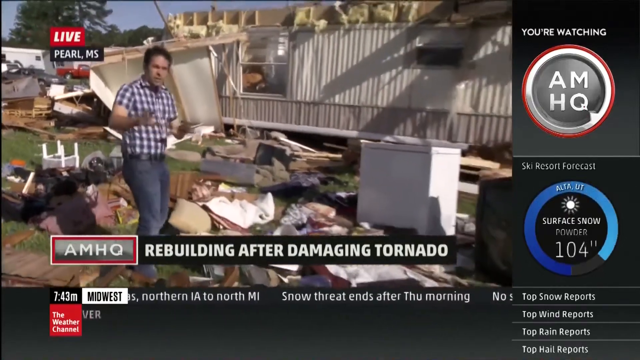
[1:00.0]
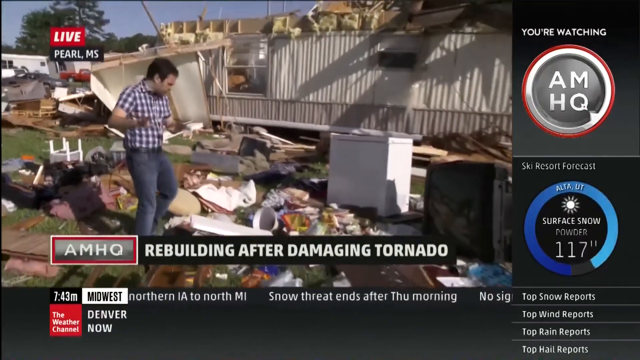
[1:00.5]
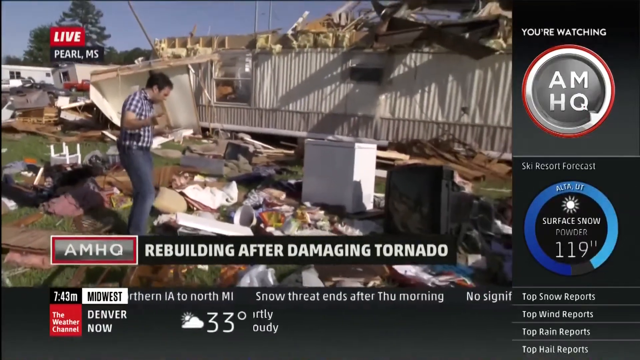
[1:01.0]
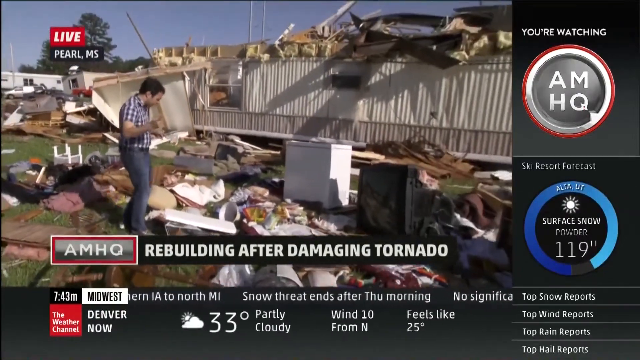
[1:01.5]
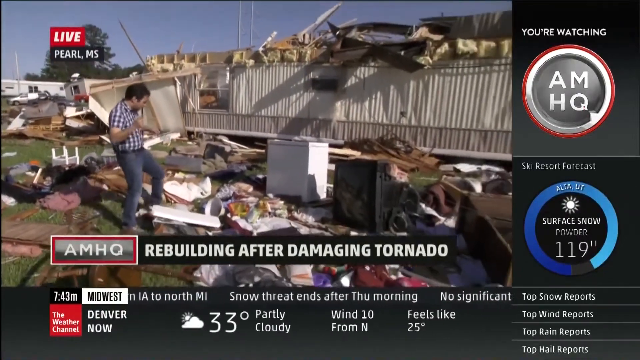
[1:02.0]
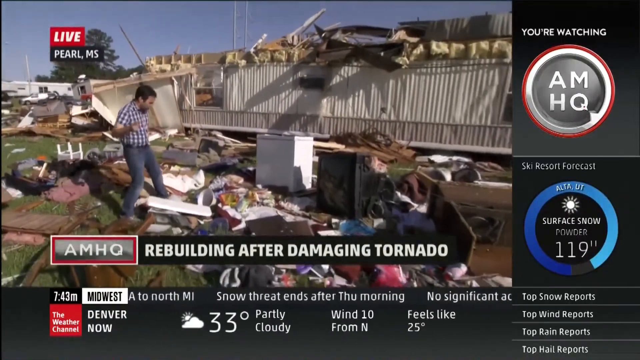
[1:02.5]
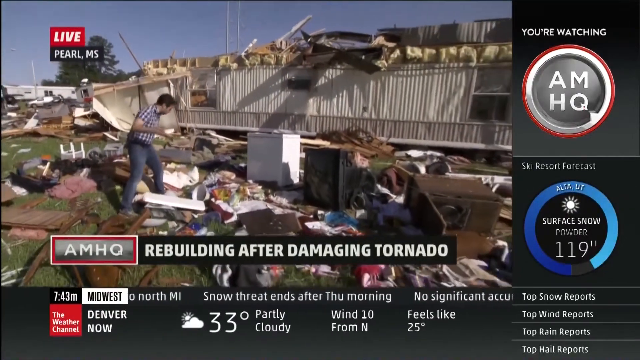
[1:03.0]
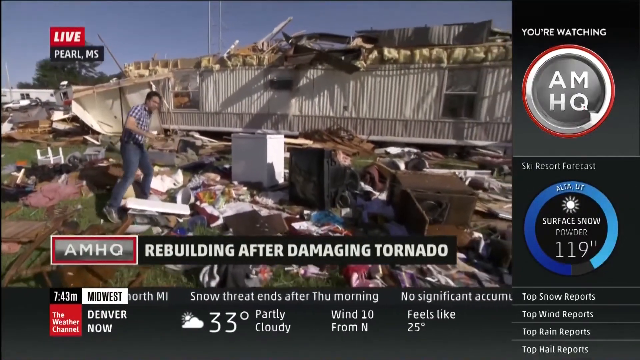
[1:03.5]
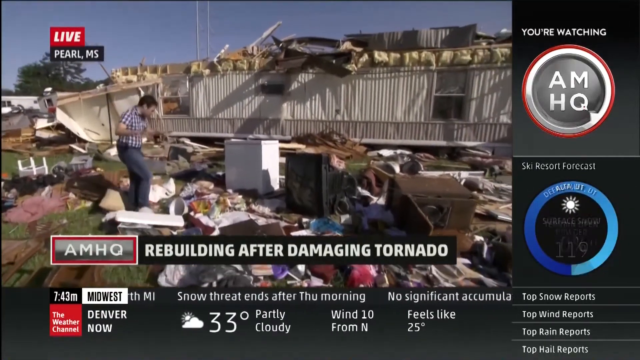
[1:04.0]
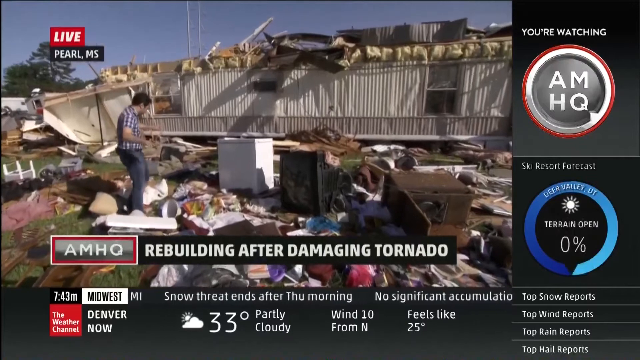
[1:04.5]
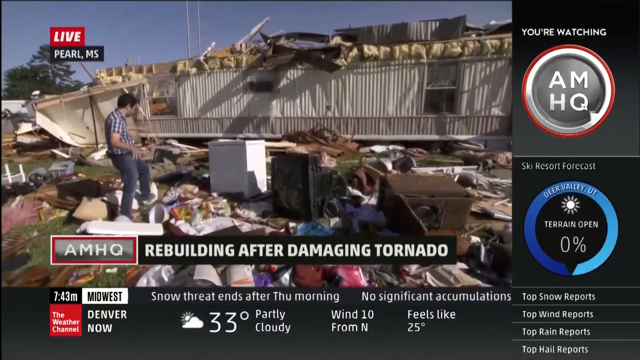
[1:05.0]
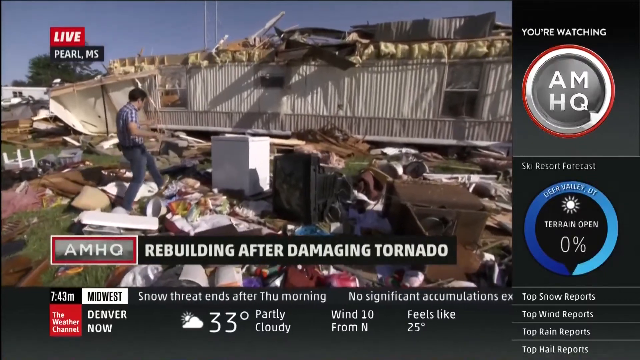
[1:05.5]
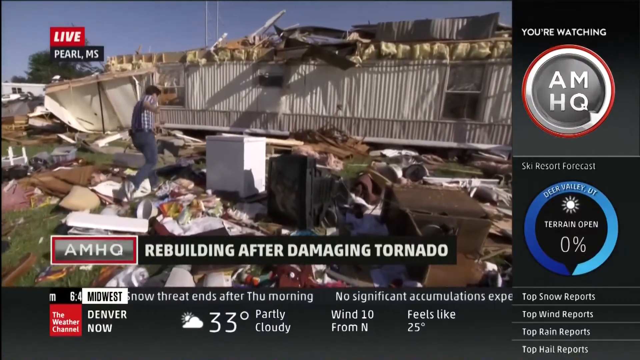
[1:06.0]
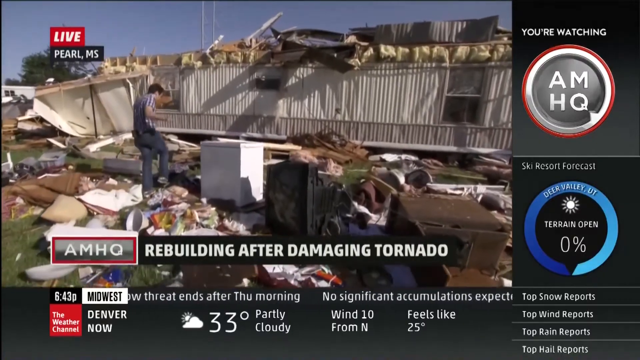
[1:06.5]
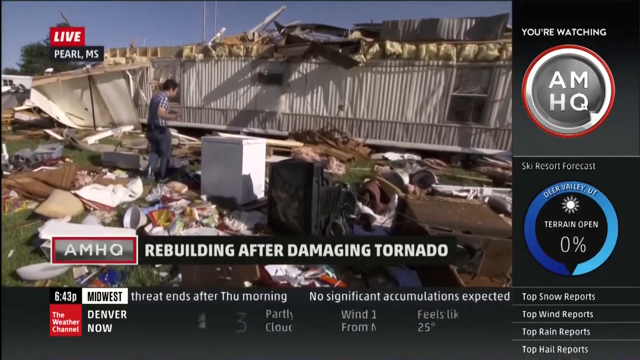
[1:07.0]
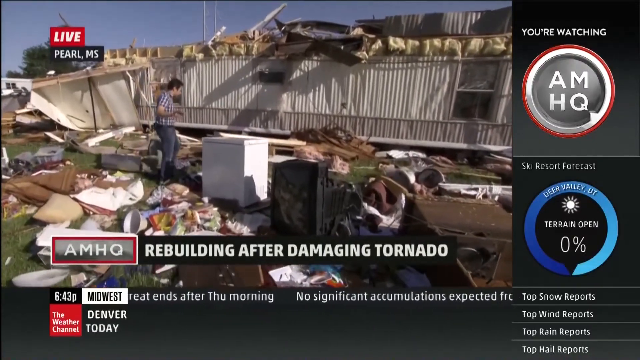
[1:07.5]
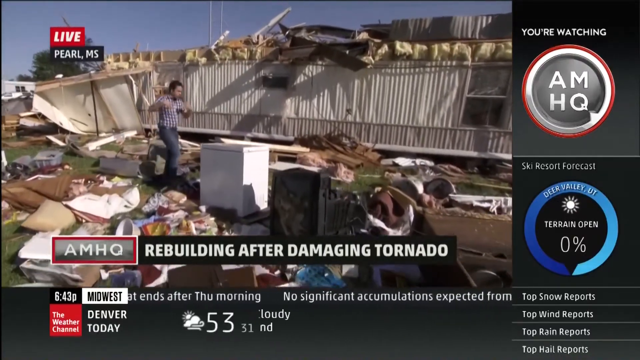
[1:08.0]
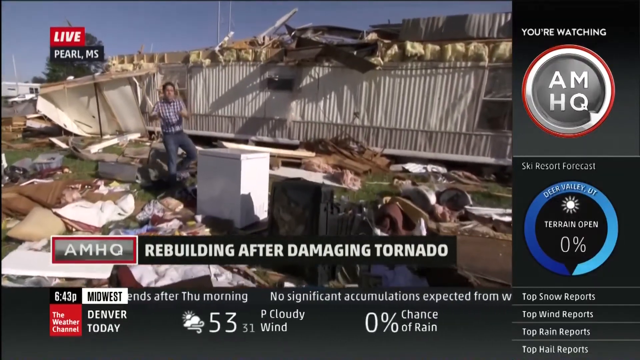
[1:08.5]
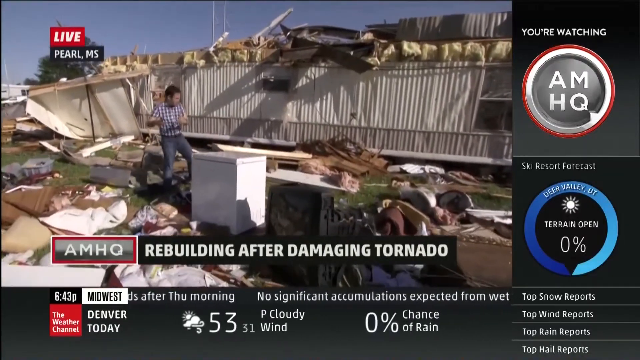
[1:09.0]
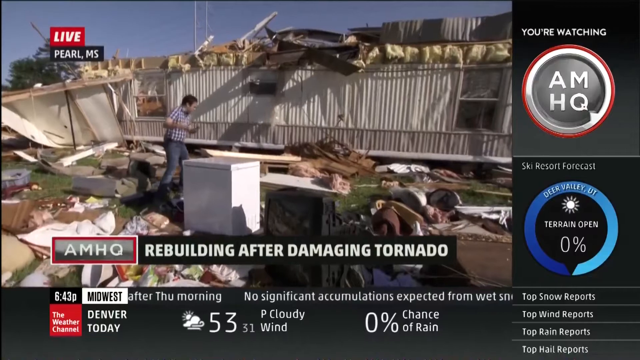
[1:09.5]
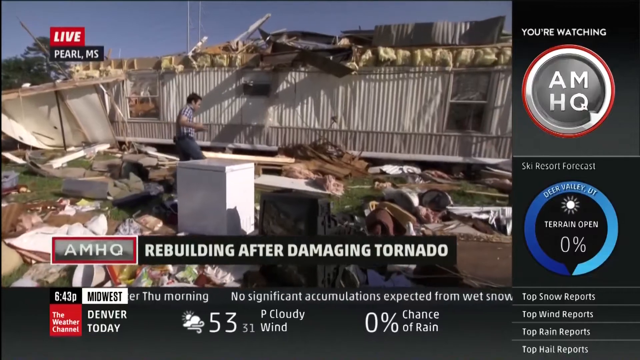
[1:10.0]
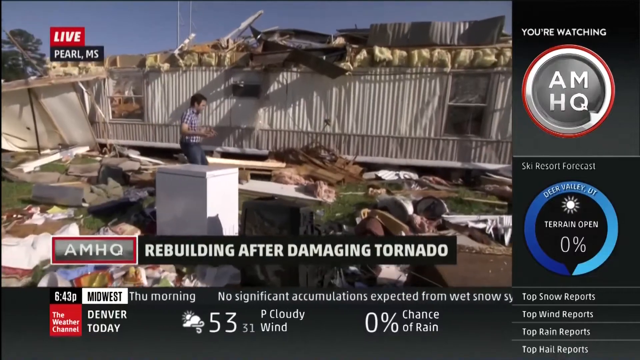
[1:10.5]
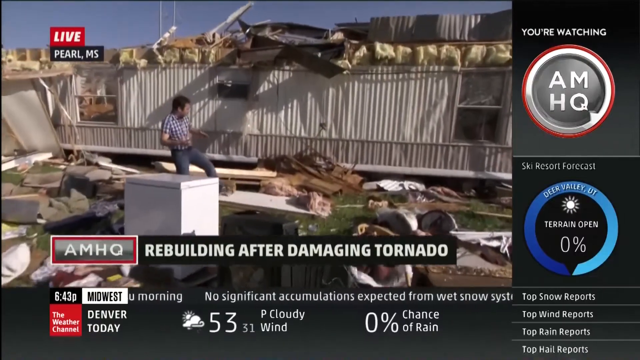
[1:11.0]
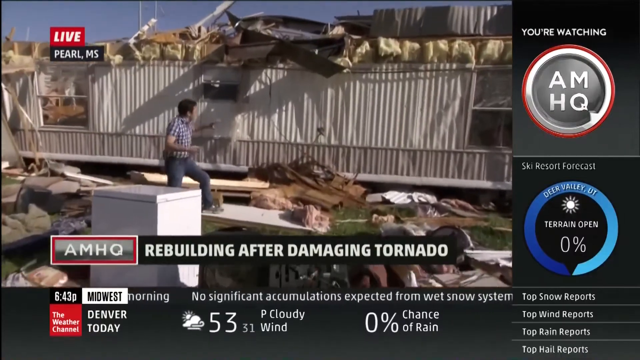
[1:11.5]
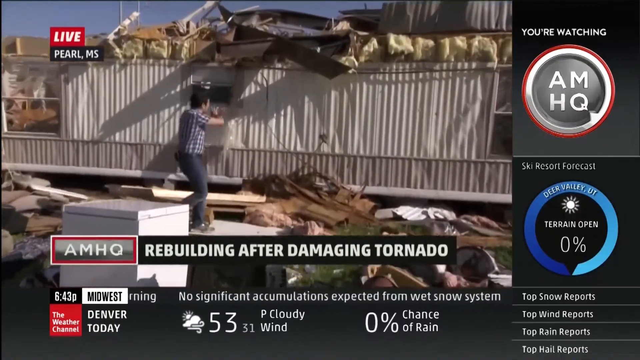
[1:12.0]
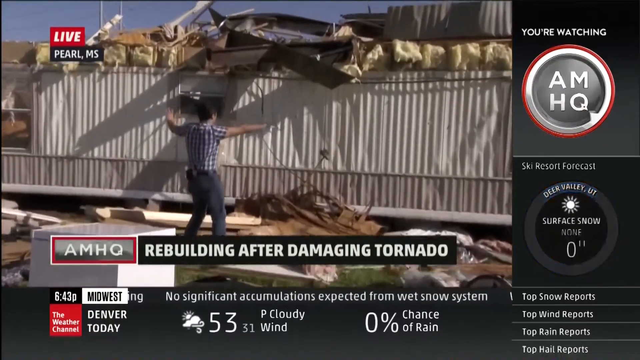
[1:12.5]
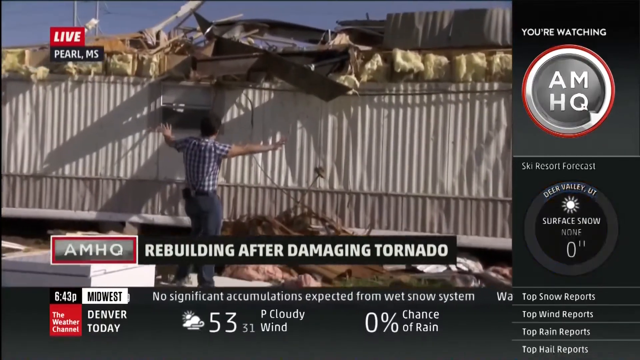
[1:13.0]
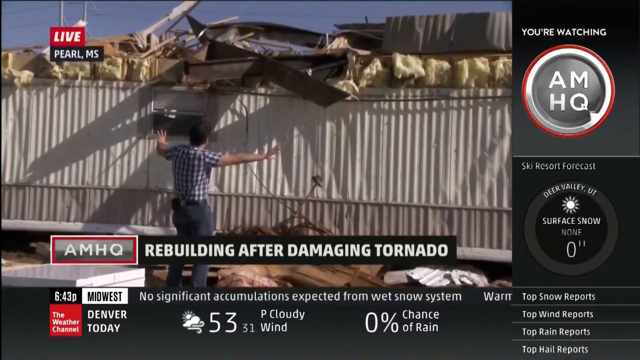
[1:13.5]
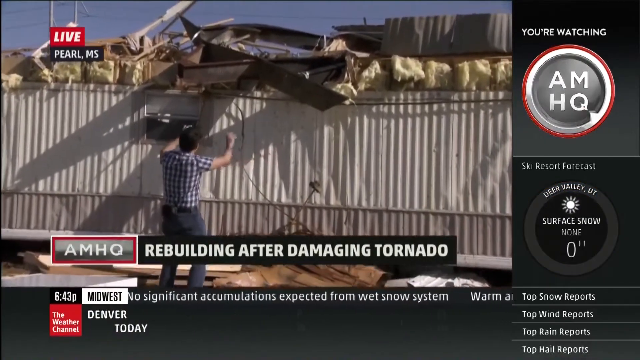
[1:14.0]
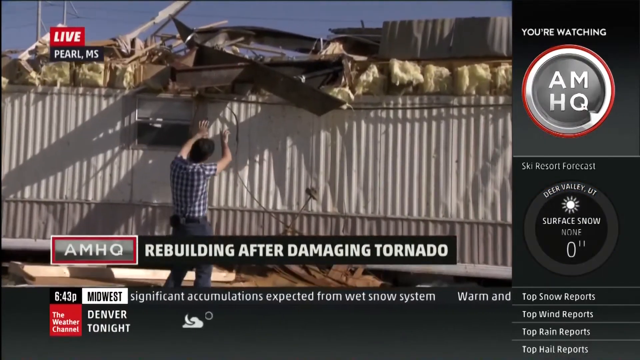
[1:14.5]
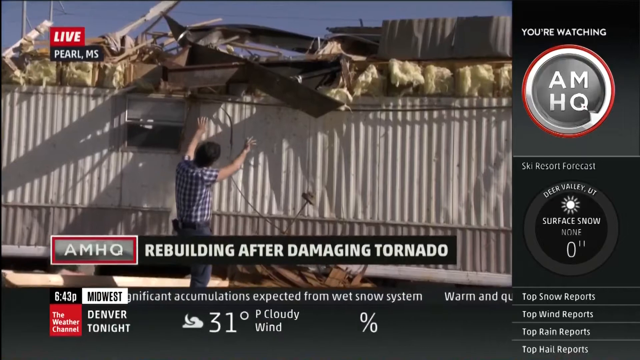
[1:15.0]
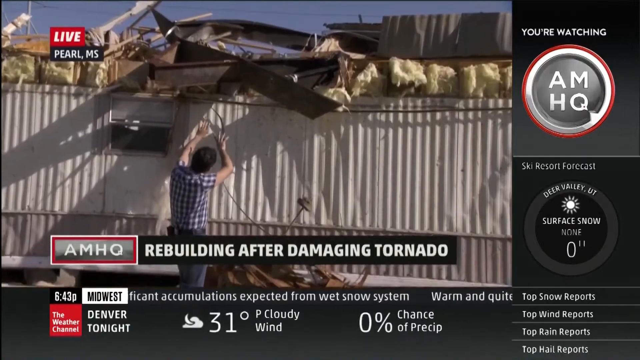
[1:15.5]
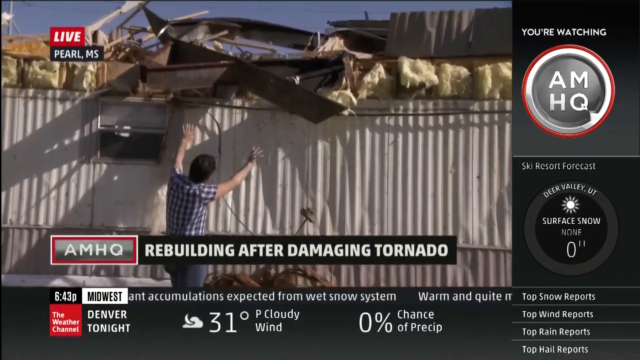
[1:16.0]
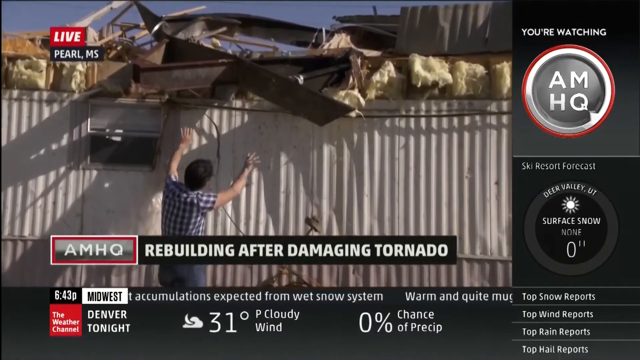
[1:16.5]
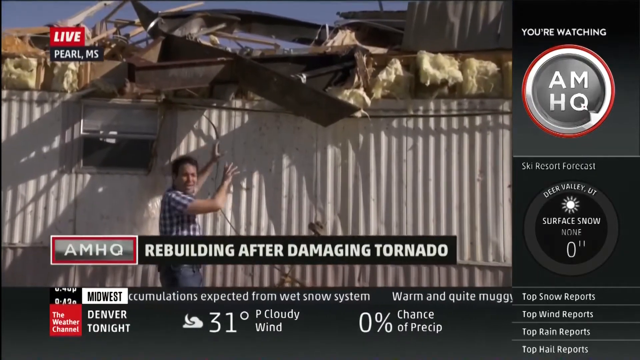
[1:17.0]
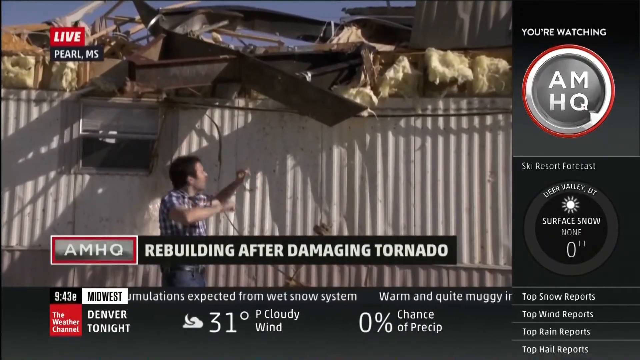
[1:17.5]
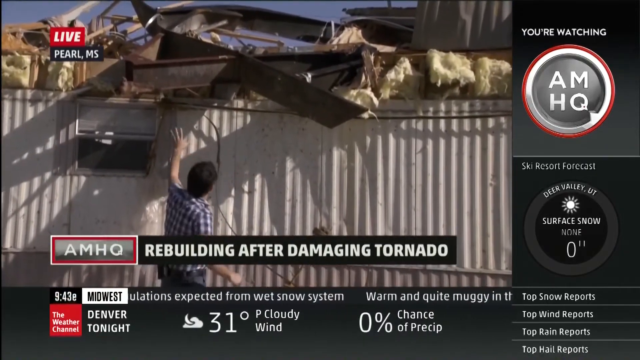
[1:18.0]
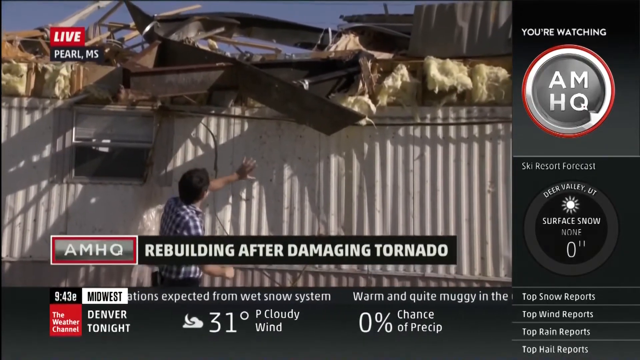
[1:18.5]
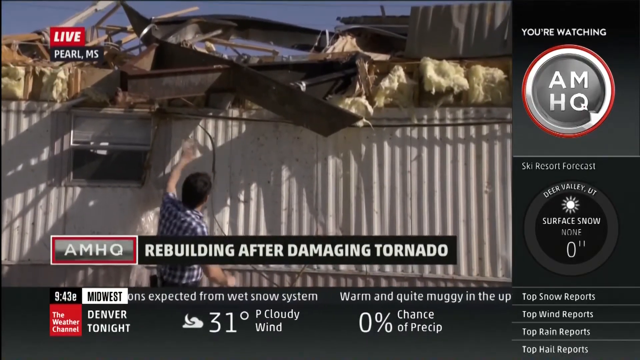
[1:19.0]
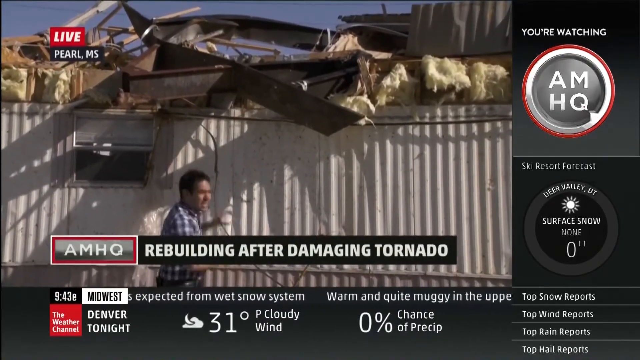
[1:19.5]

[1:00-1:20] The video moves to the scene where the tornado destroyed or damaged the buildings, construction and infrastructure in the area. The camera takes the viewer around the environment, which is a total mess: the building is down, the construction is down, and a lot of damaged property lies on the floor.